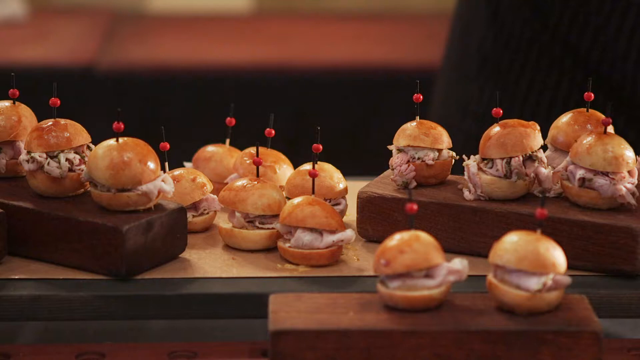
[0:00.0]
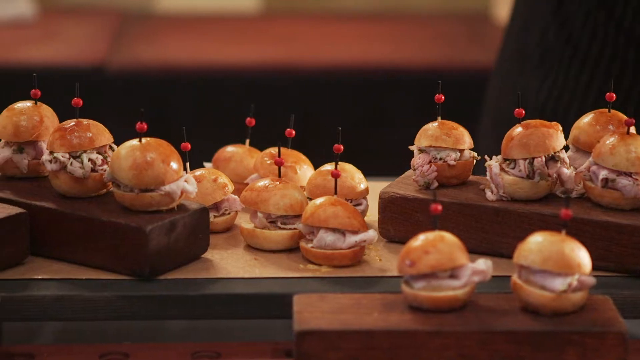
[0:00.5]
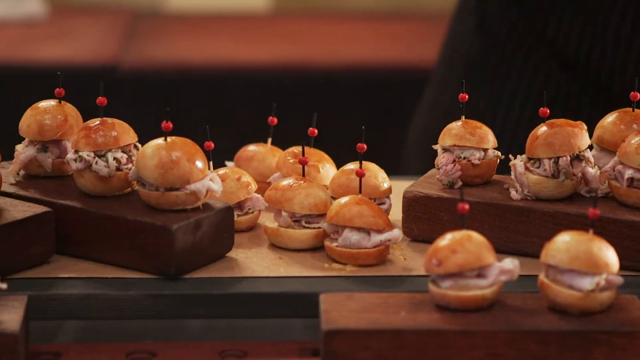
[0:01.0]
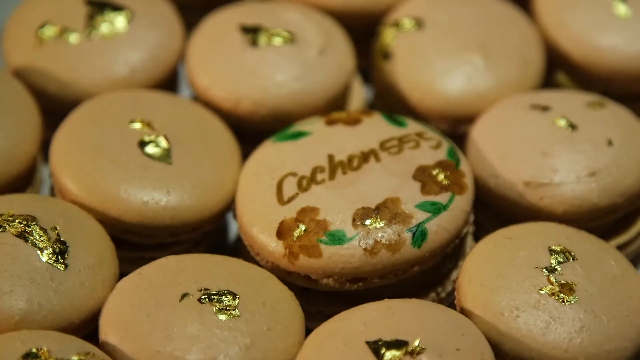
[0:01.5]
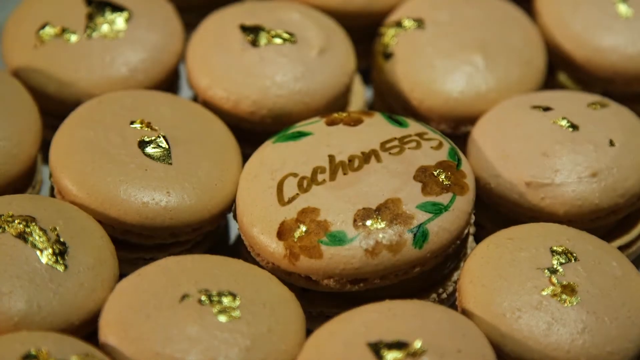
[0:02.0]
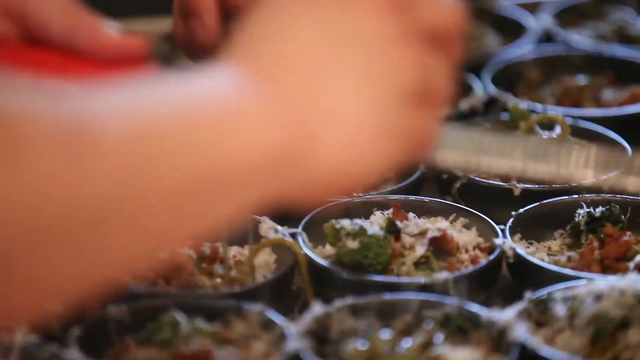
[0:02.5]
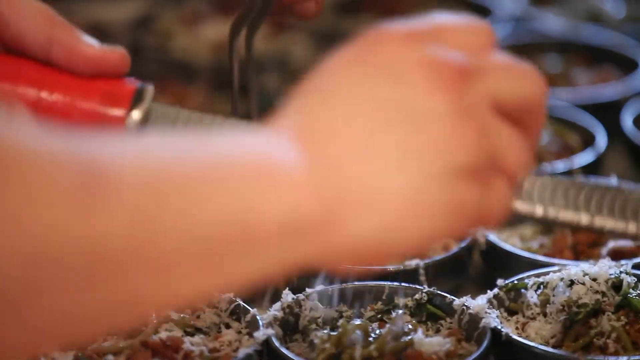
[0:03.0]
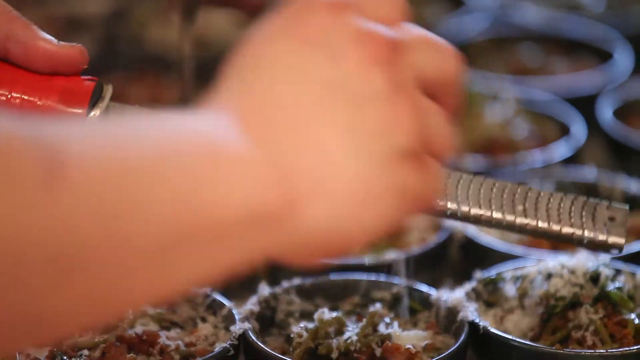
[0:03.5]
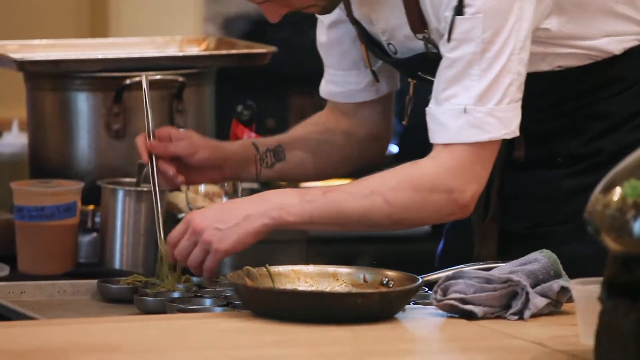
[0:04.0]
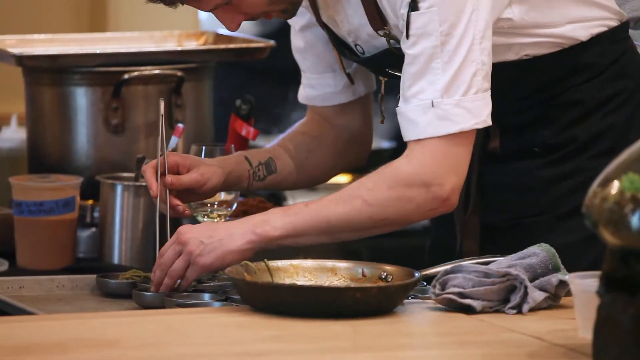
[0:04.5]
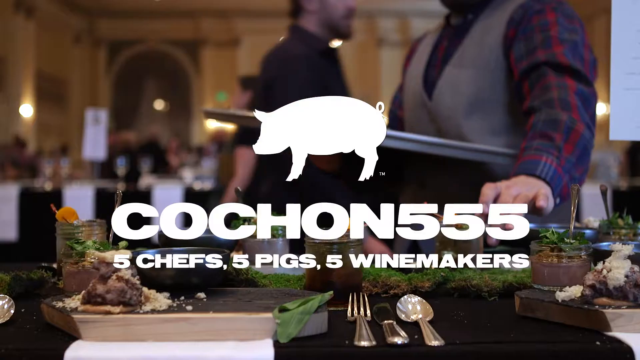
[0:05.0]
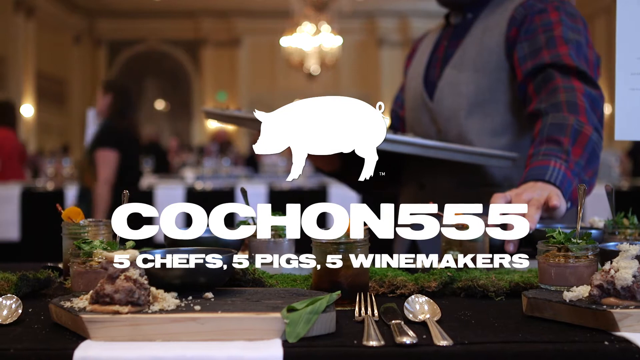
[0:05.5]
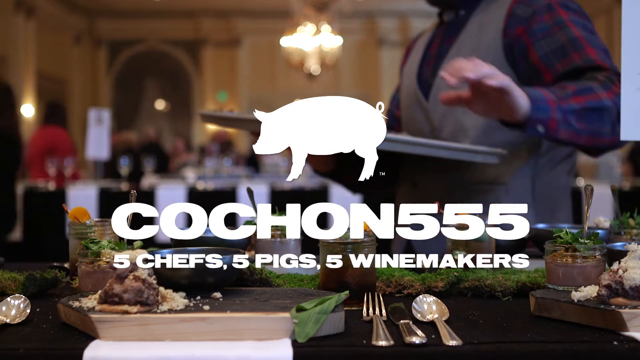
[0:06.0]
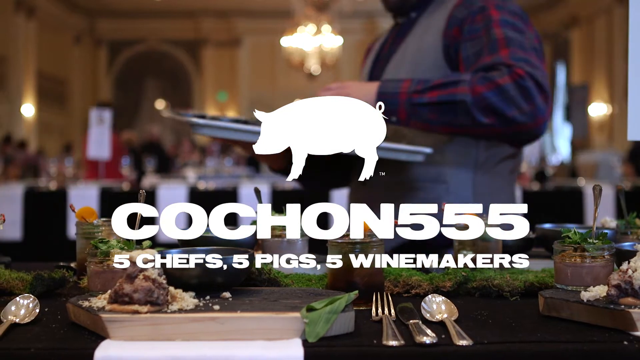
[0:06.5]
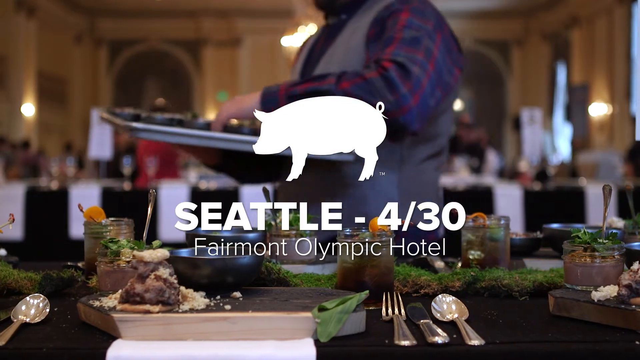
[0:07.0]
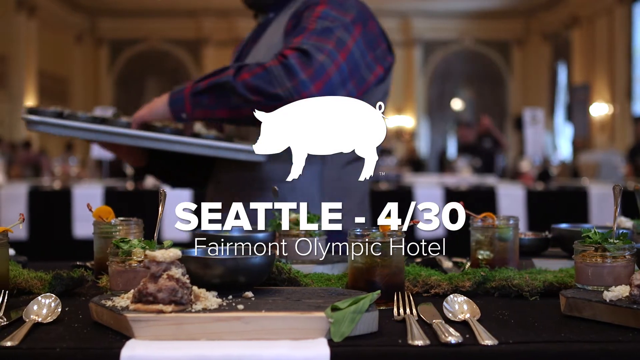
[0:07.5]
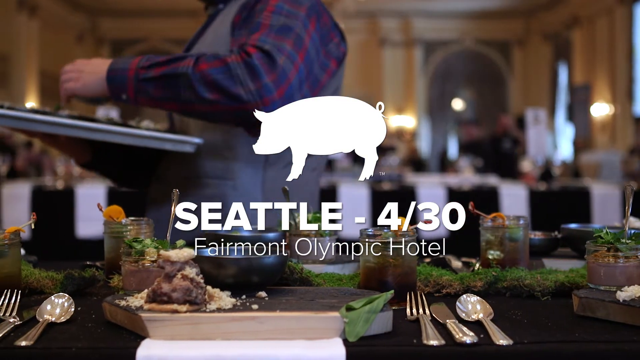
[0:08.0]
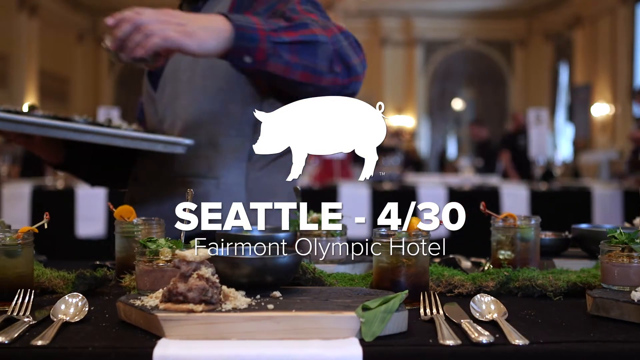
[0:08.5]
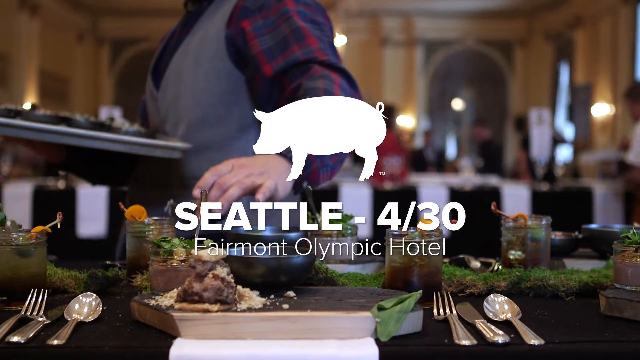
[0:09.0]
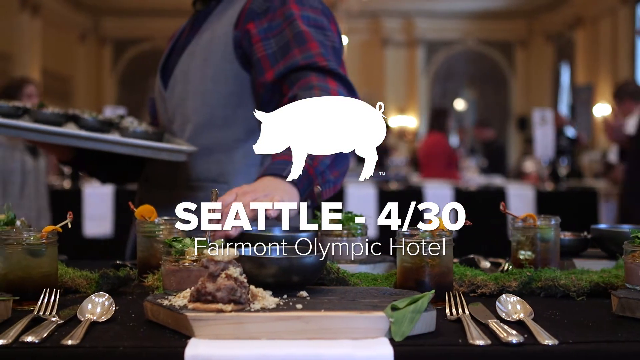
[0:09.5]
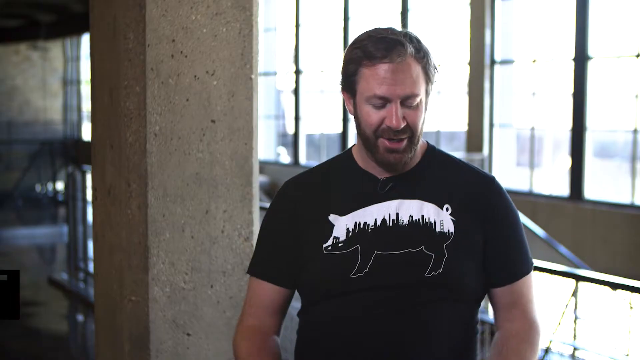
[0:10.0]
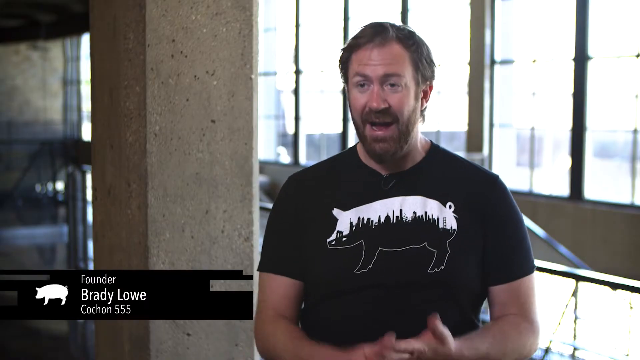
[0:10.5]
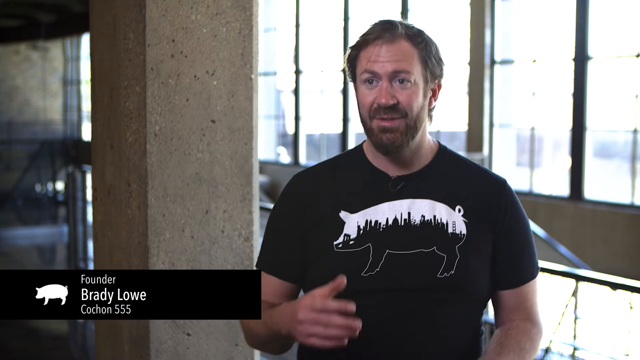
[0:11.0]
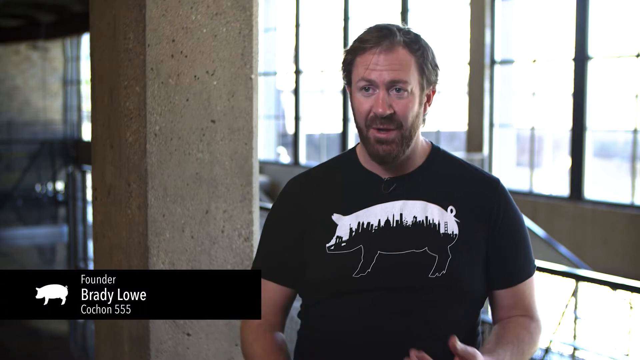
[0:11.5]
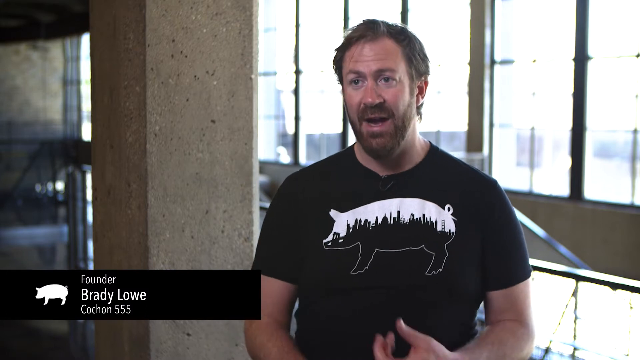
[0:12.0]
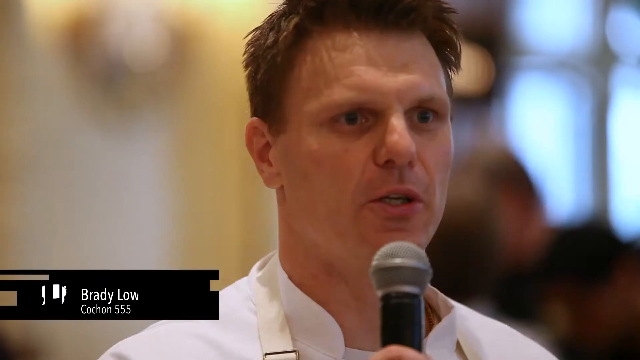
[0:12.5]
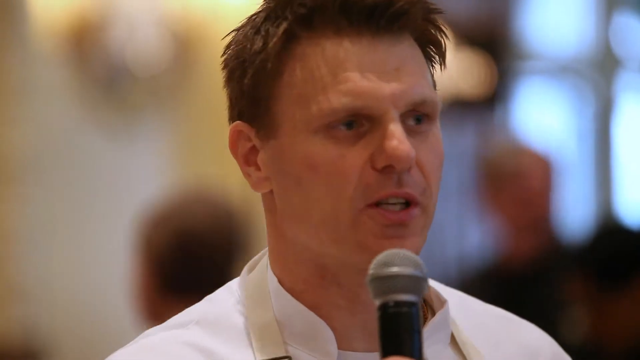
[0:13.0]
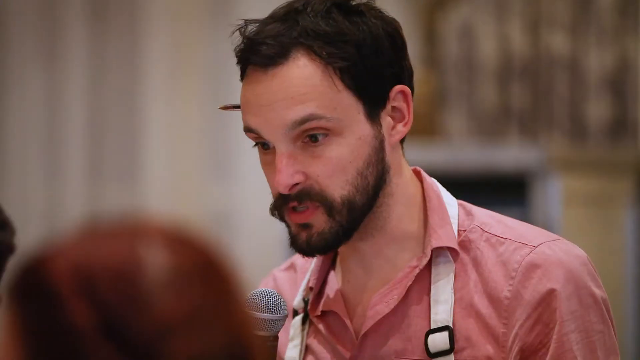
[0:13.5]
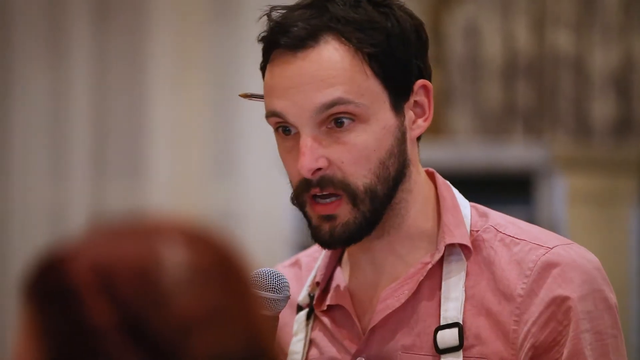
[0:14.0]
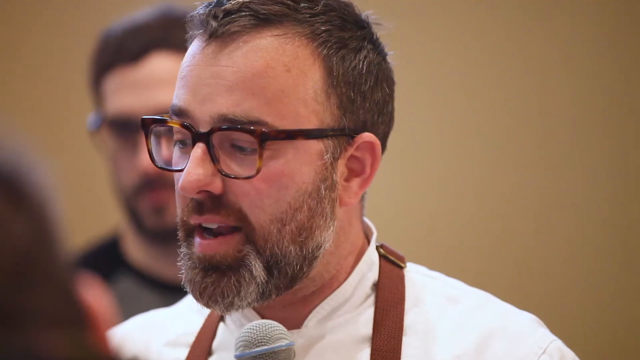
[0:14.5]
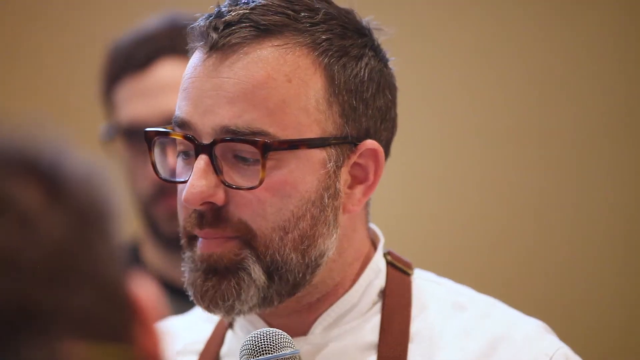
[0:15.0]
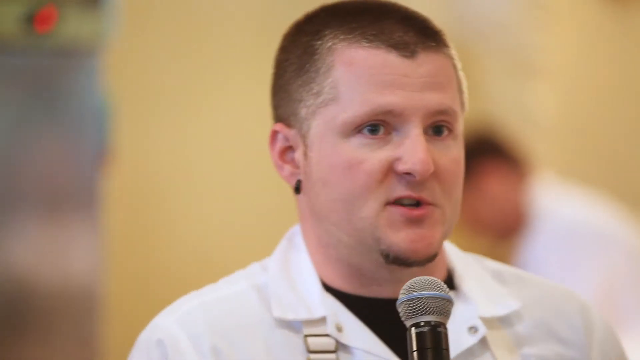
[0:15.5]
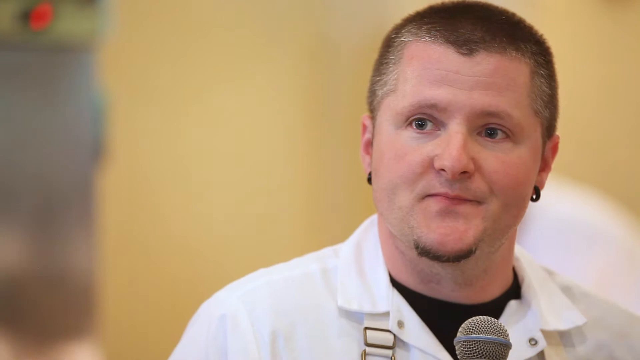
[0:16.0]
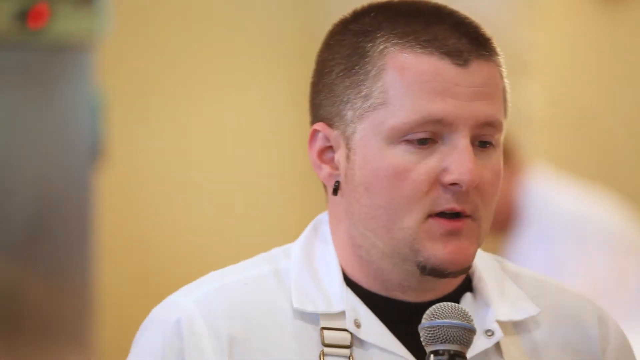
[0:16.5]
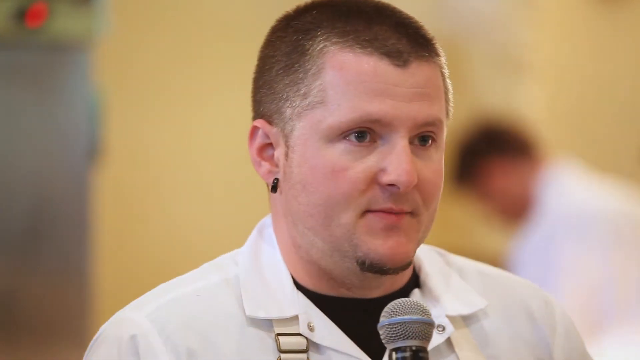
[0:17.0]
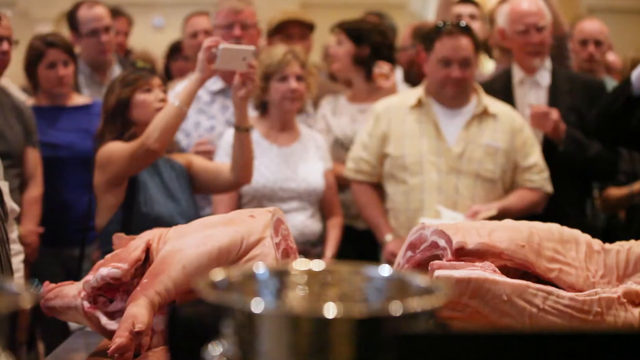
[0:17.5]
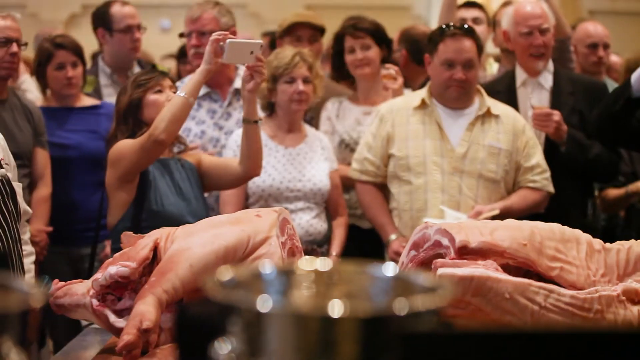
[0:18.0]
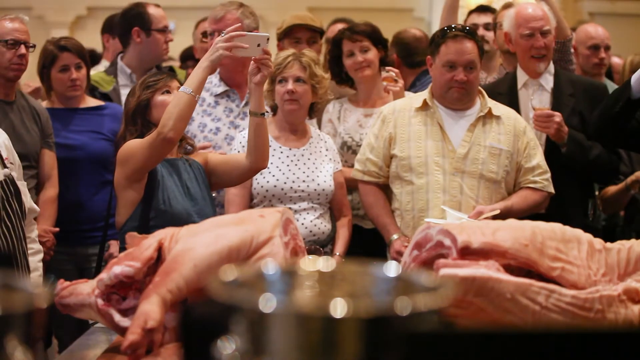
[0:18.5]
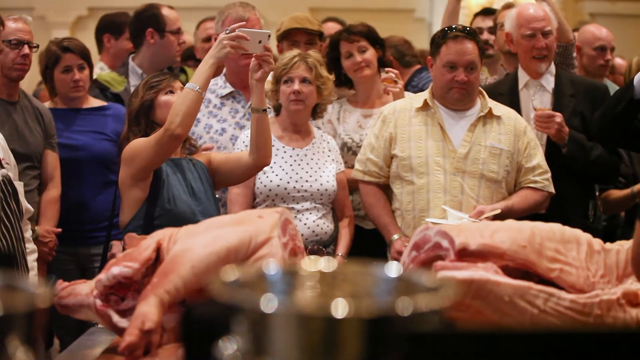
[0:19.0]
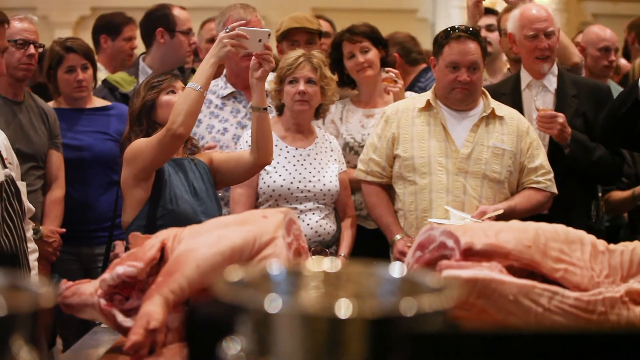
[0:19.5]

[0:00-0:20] A table holds some little hamburgers with red circles pinned on them, and the name "church on 555" appears. Someone scrubs some white parts on the cookies, and a chef is working. A "church on 555" logo appears, followed by the text "five chefs, five pigs, five winemakers." Many chefs appear, and people walk by in a great hall. The text "Seattle 4/30 Fairmont Olympic Hotel" is shown. A man named Brandy Love, the founder of the firm, wears a t-shirt with a black-and-white picture of a pig on it. There is a glimpse of him talking to others, who are chefs holding microphones and talking. A man with earrings is seen. A pig is split open into parts of meat, and people eat the freshest part of the meat.